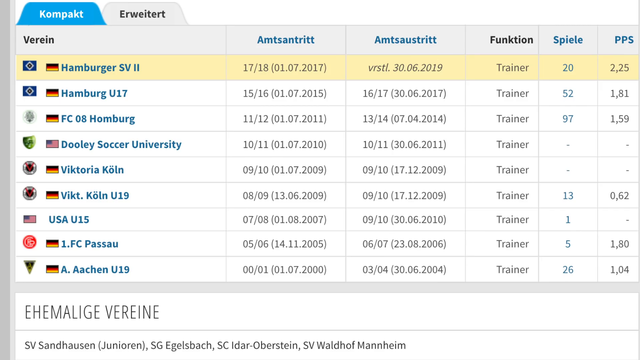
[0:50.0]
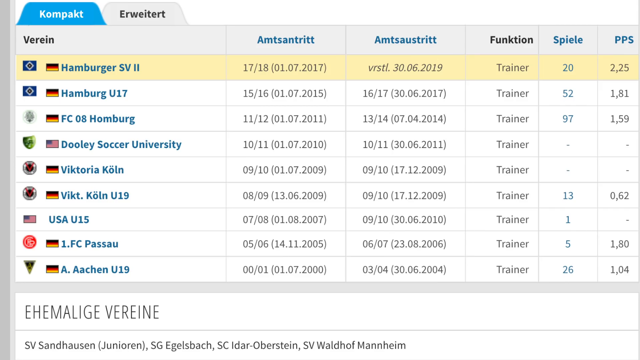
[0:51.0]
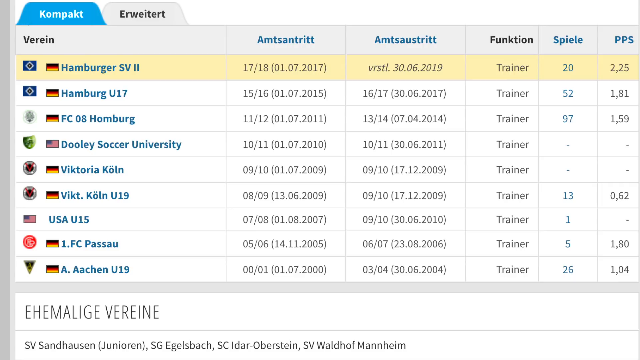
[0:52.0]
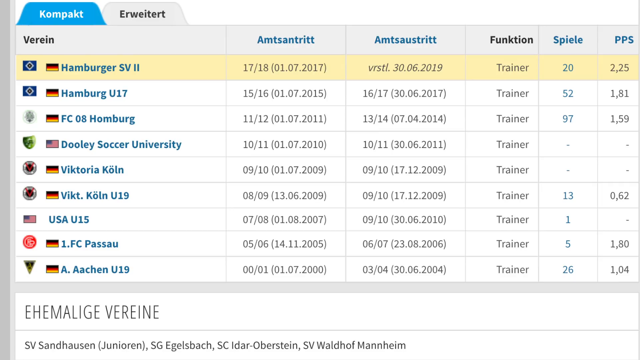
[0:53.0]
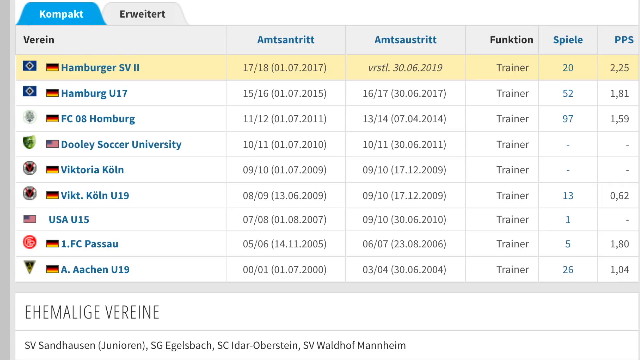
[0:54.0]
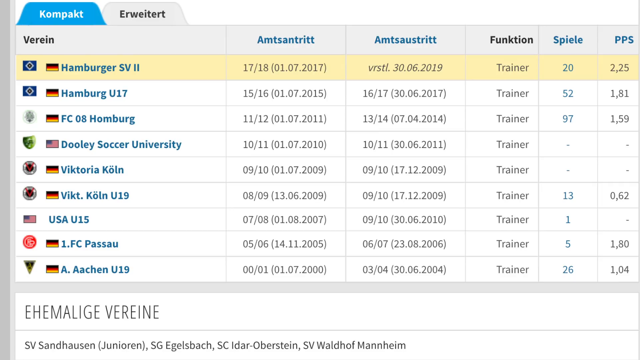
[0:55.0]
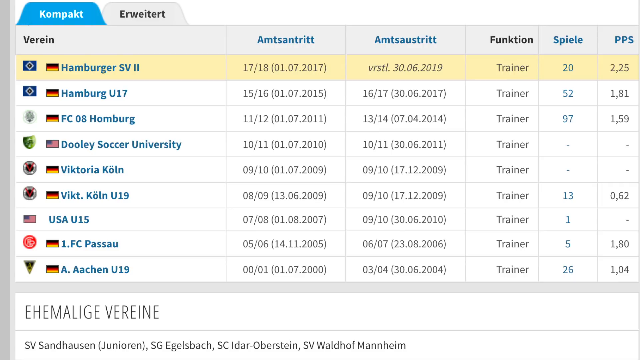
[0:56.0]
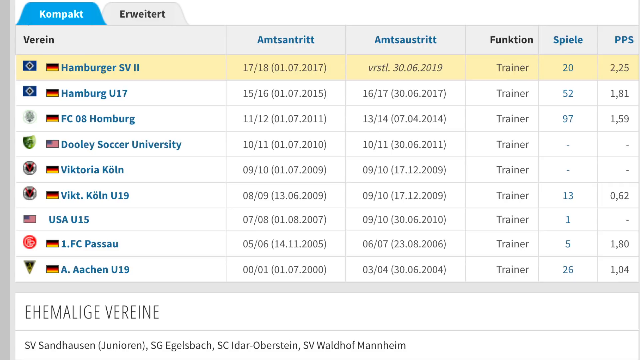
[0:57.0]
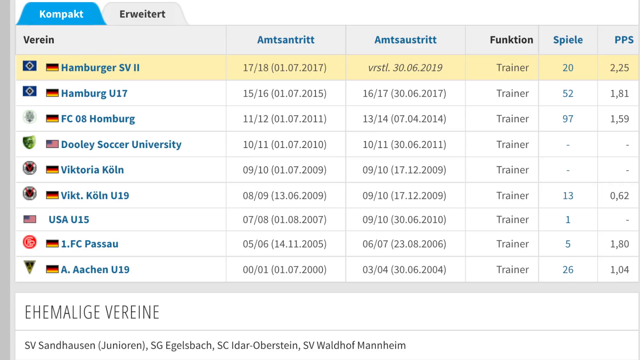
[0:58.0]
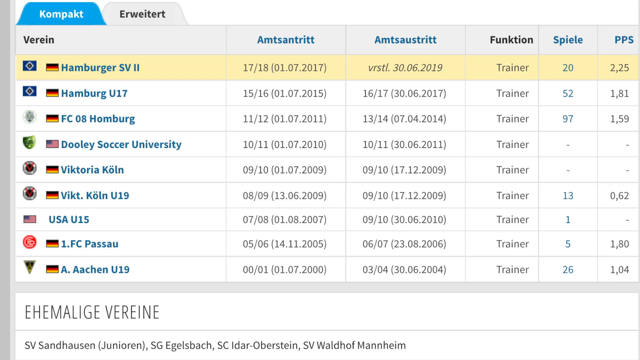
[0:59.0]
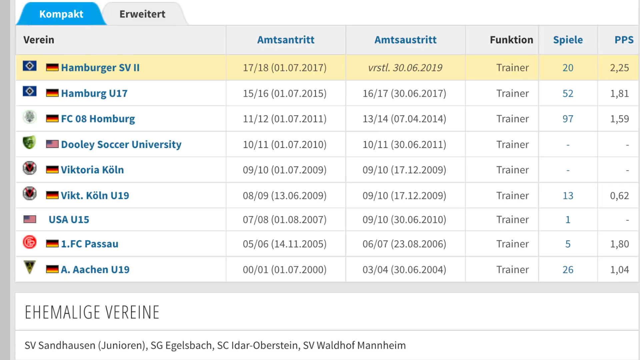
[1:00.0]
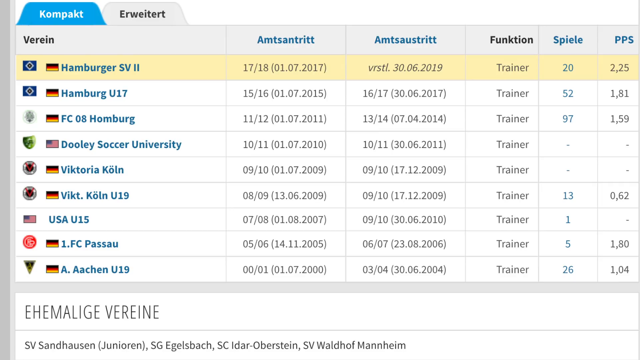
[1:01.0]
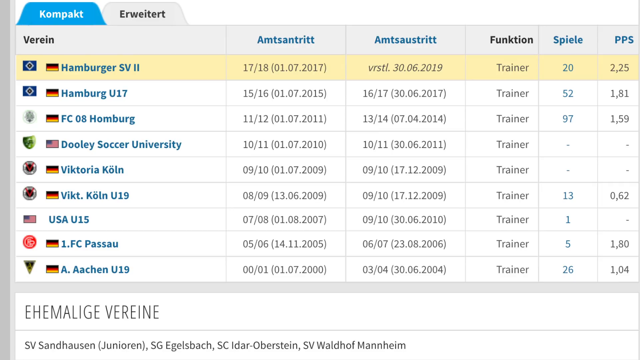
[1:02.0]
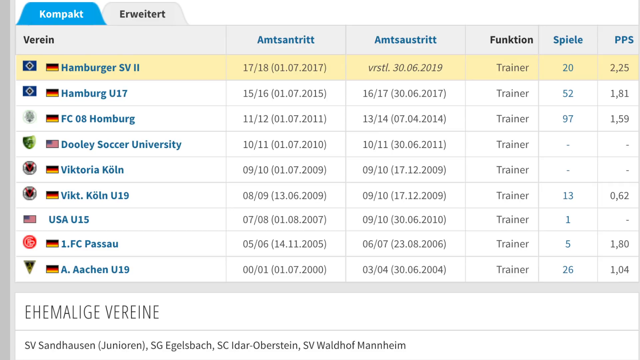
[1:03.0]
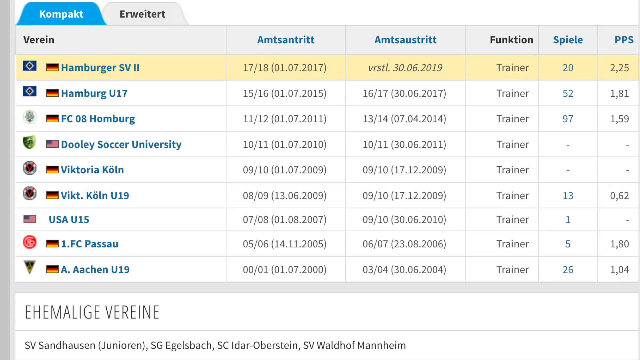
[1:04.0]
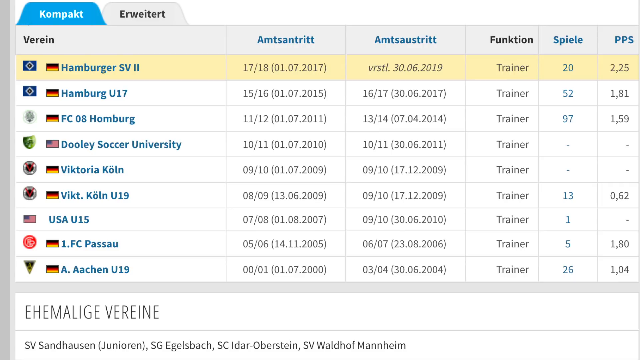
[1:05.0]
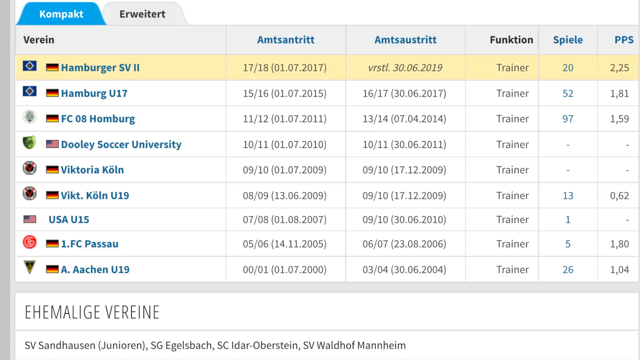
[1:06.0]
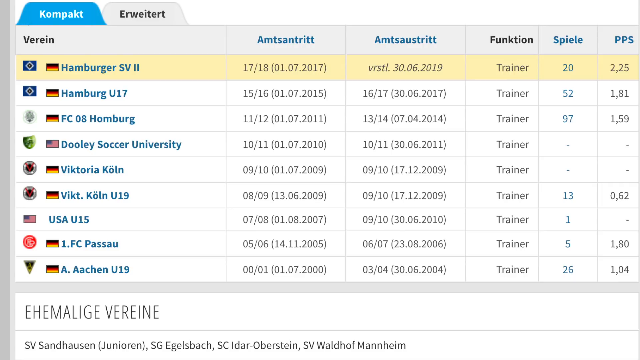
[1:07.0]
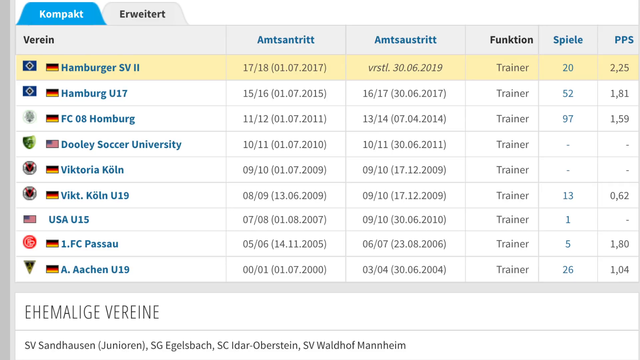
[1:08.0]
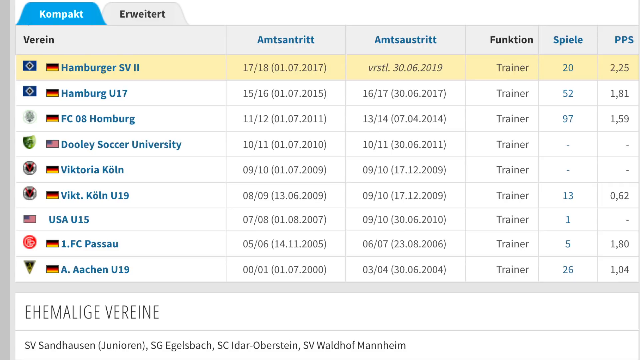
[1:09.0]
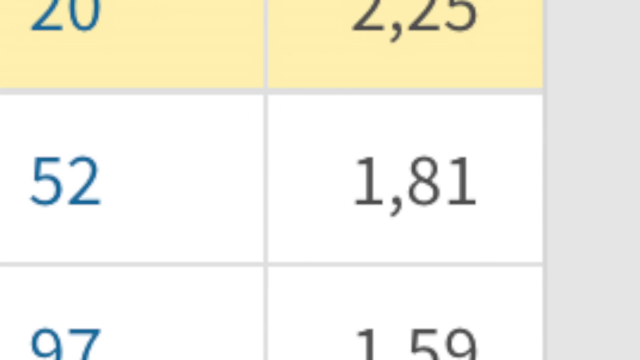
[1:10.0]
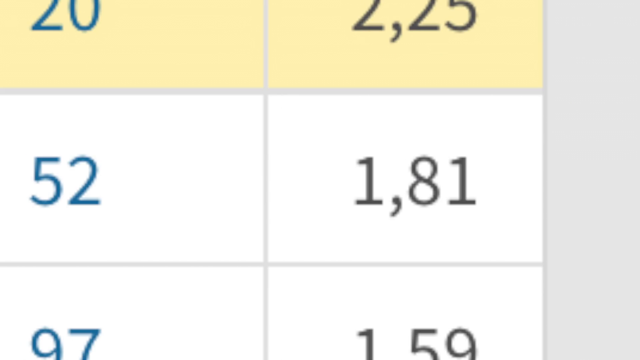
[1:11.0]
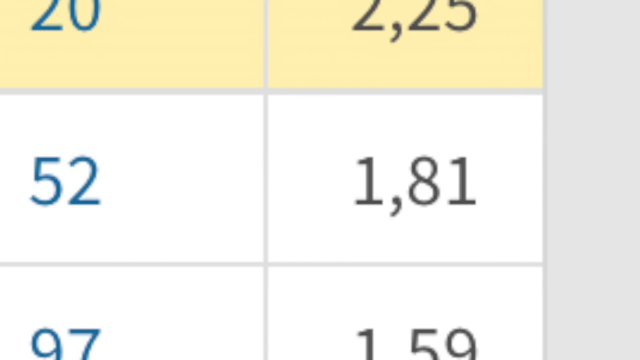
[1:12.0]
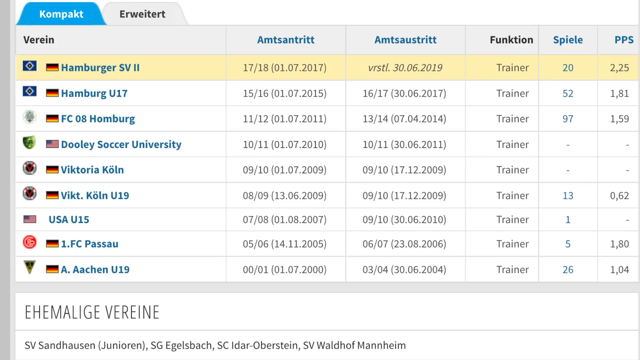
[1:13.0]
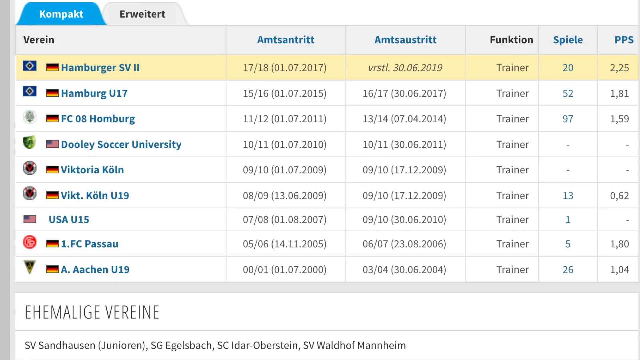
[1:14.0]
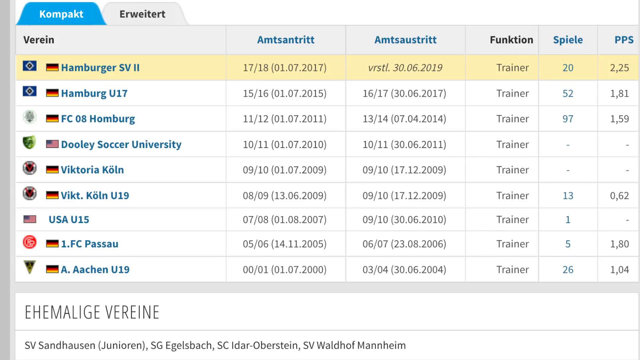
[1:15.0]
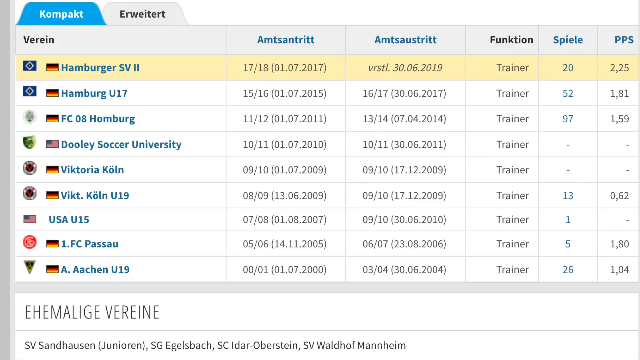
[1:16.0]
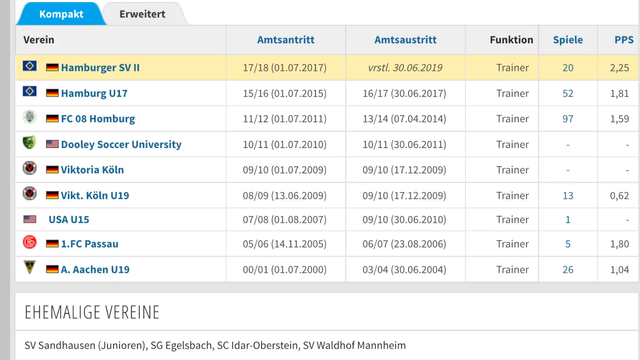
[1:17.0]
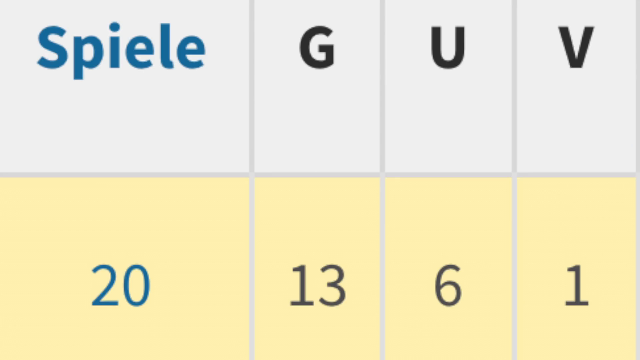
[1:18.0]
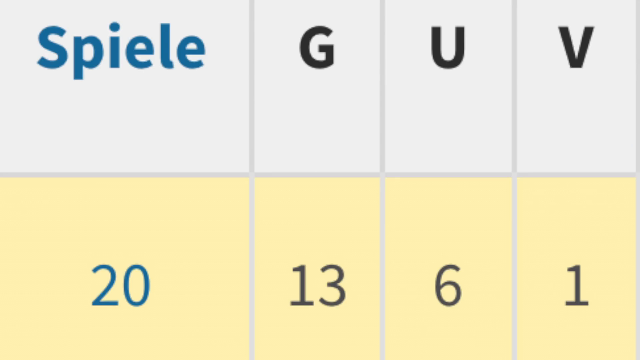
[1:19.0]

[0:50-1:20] Text information is displayed on the screen, including "Hamburg" and other text in a non-English language, along with more information. No physical subjects appear on this screen, which looks like an application or some sort of web page; it is mostly a static screen of information on a white background. The view zooms into specific information on the screen, then transitions to another zoomed-in section. It swaps between these screens, showing different country flags associated with each of the rows on the screen, with no physical subjects shown.